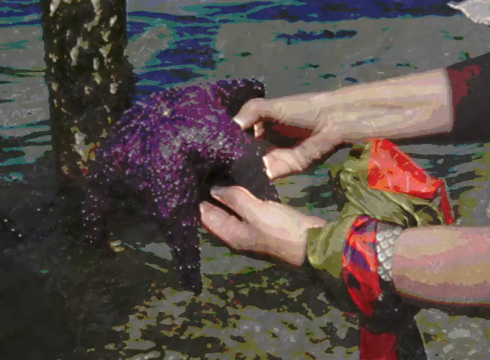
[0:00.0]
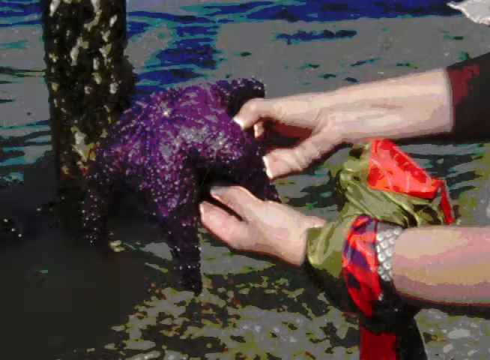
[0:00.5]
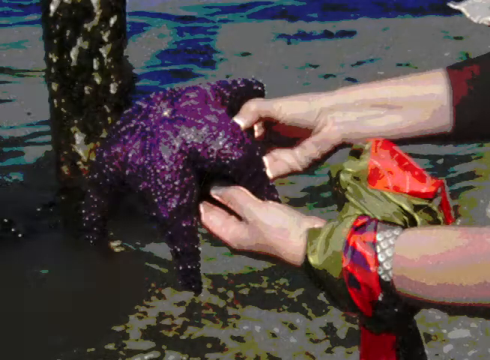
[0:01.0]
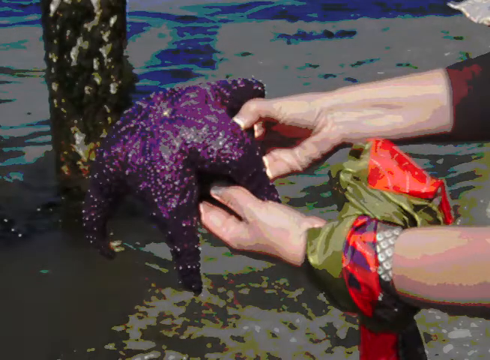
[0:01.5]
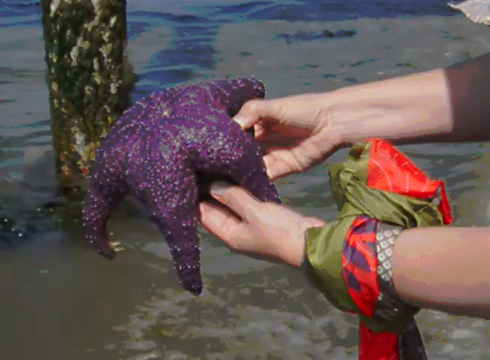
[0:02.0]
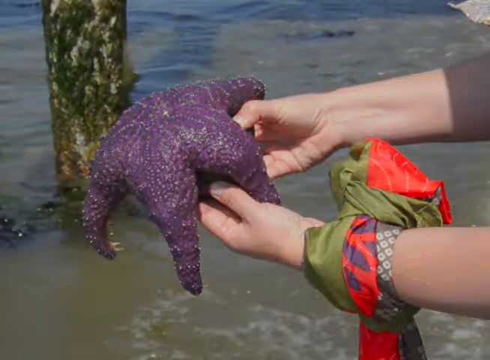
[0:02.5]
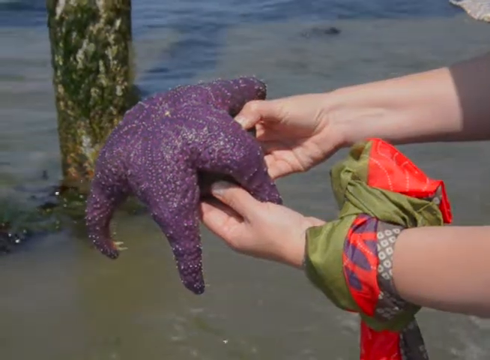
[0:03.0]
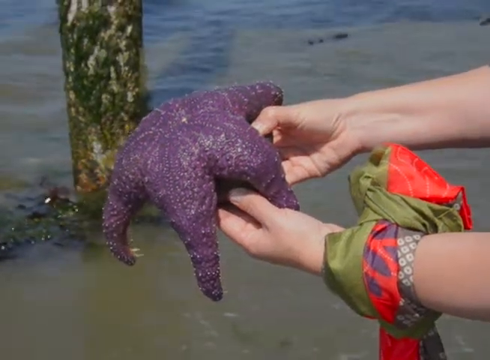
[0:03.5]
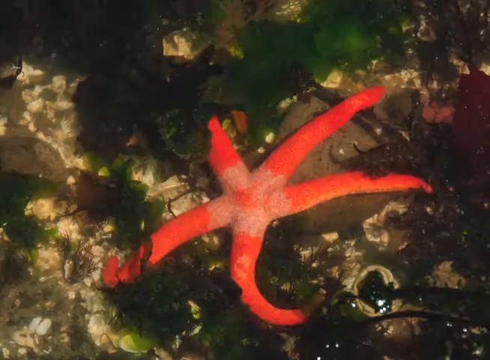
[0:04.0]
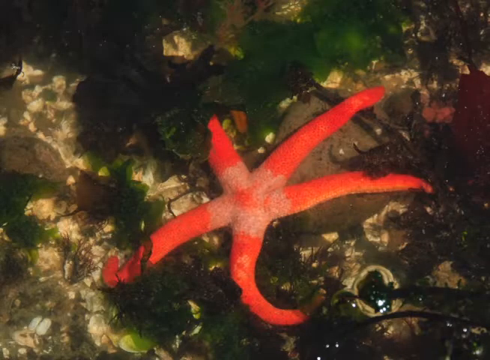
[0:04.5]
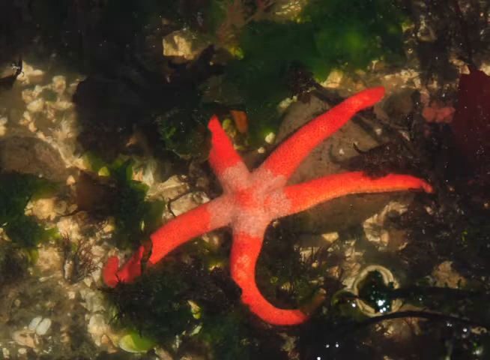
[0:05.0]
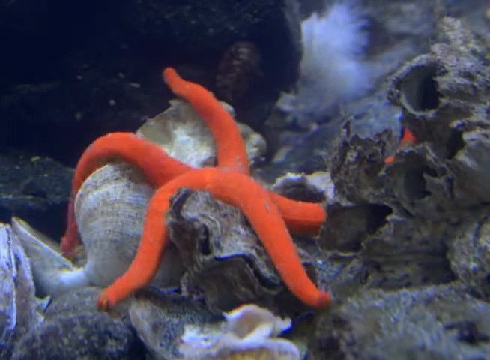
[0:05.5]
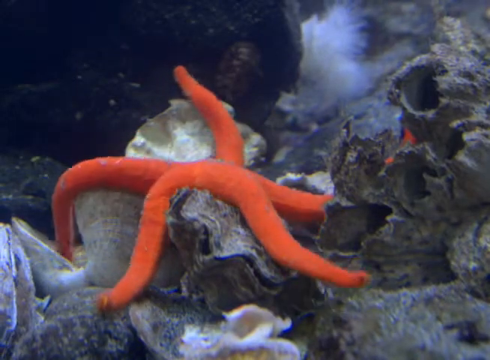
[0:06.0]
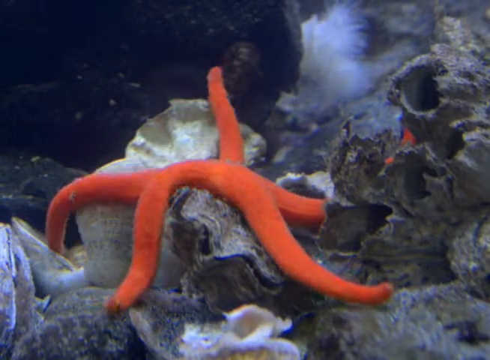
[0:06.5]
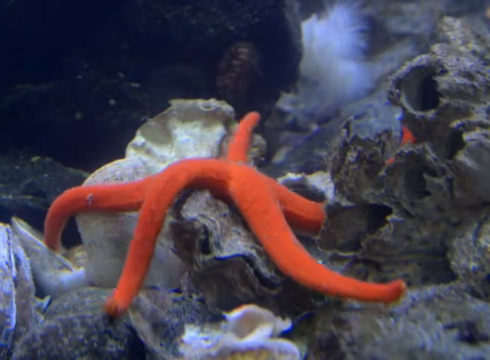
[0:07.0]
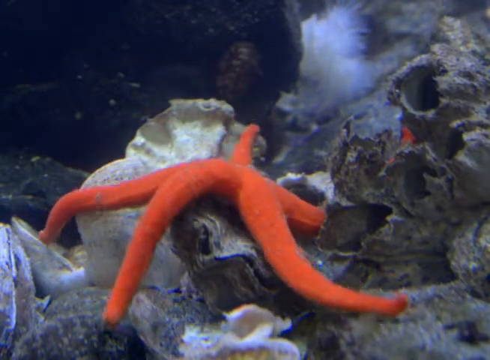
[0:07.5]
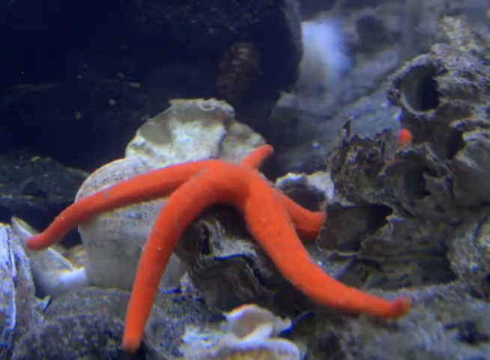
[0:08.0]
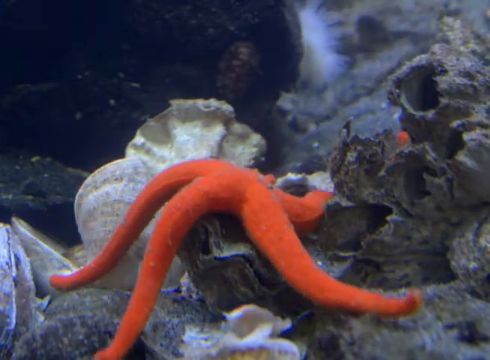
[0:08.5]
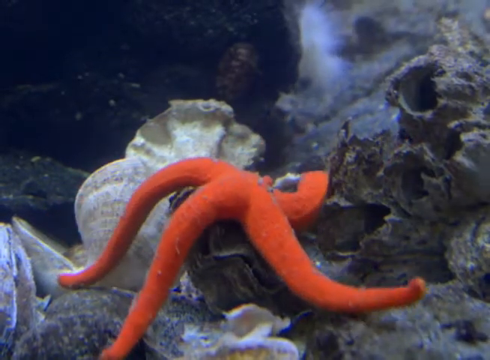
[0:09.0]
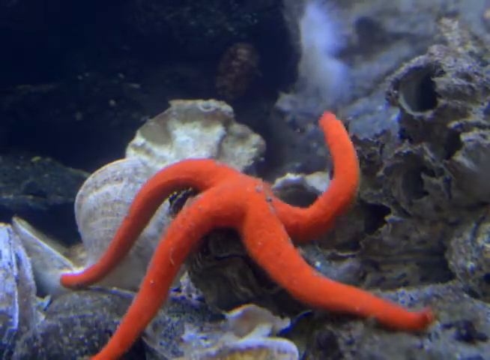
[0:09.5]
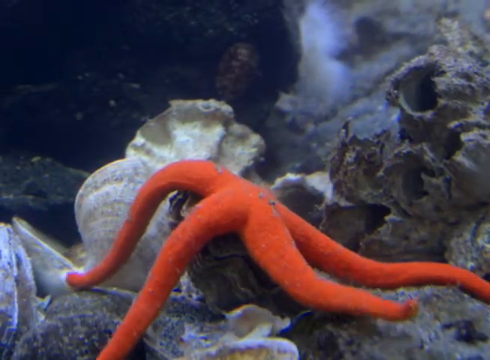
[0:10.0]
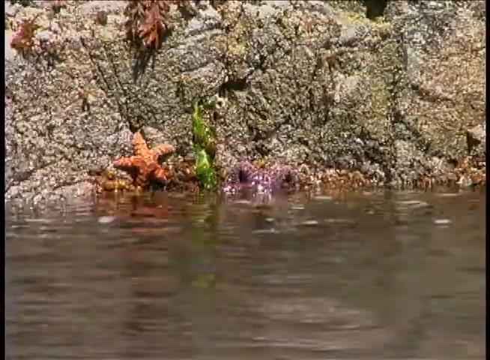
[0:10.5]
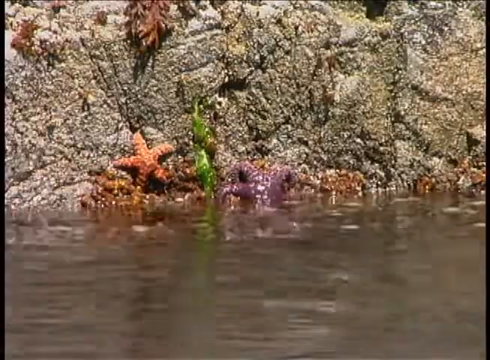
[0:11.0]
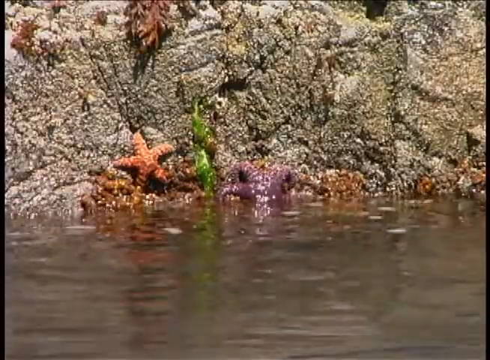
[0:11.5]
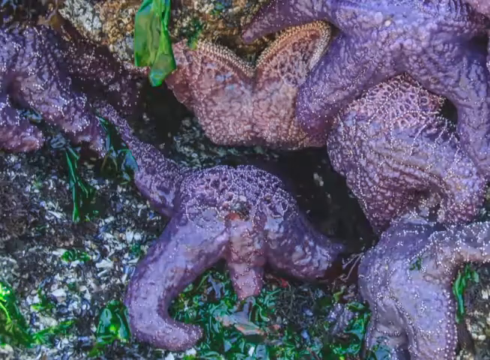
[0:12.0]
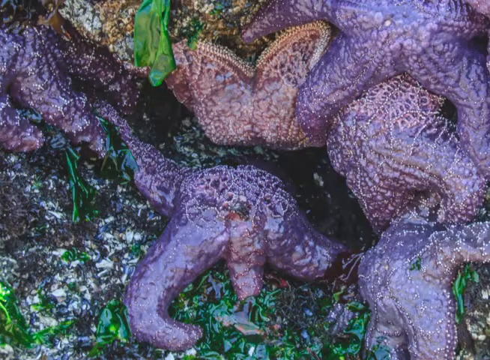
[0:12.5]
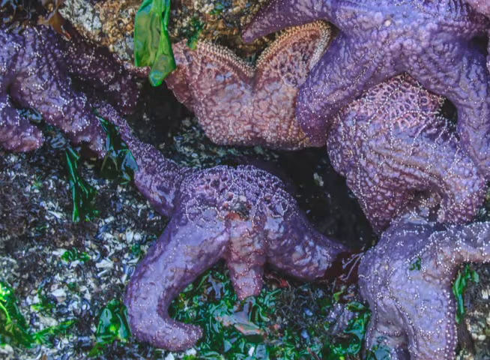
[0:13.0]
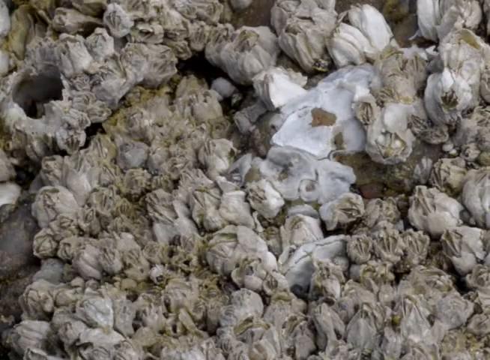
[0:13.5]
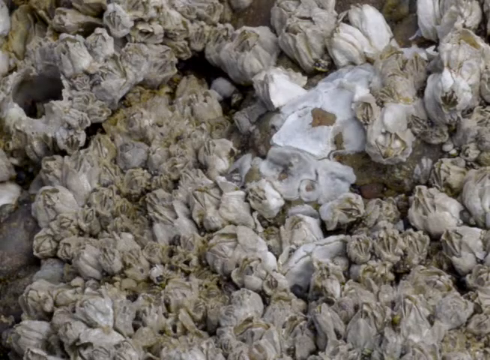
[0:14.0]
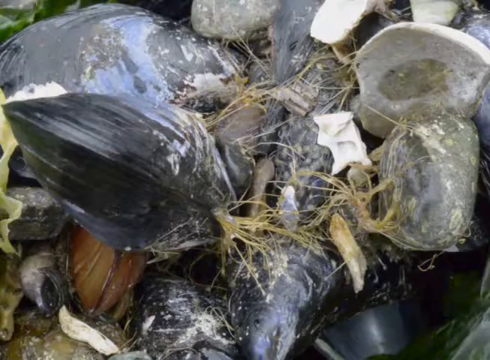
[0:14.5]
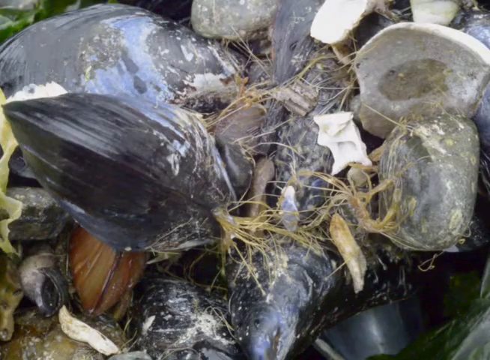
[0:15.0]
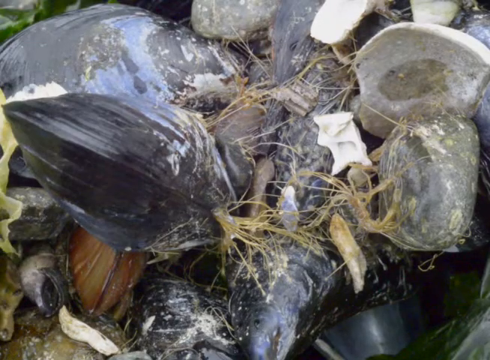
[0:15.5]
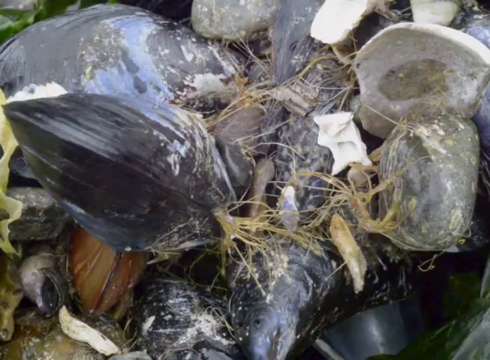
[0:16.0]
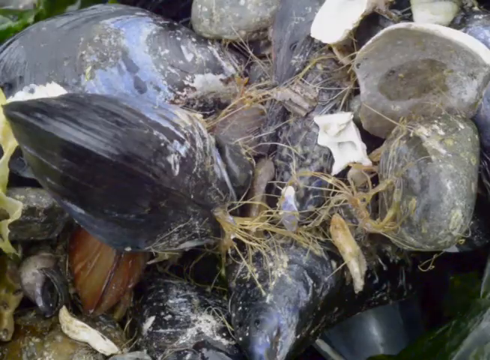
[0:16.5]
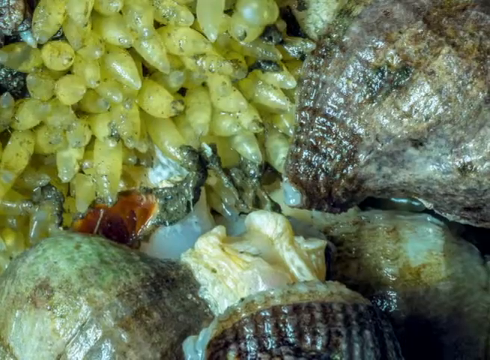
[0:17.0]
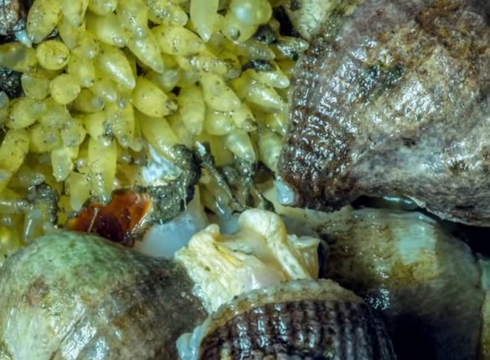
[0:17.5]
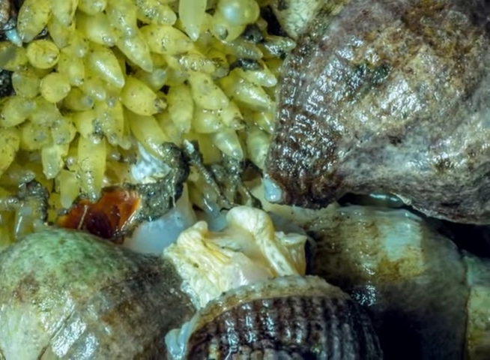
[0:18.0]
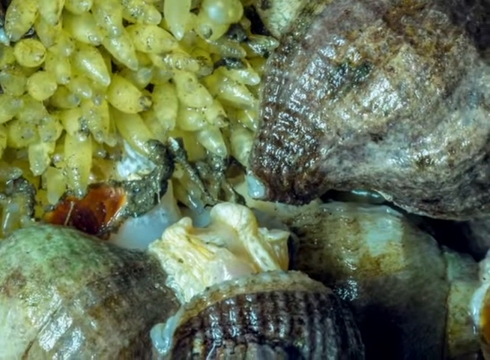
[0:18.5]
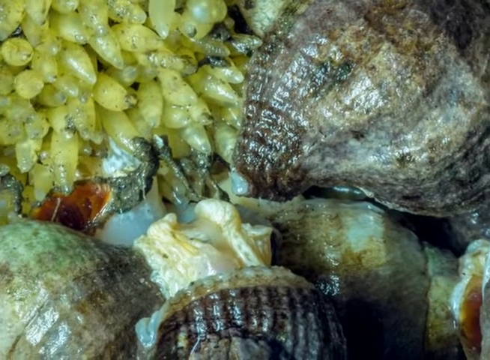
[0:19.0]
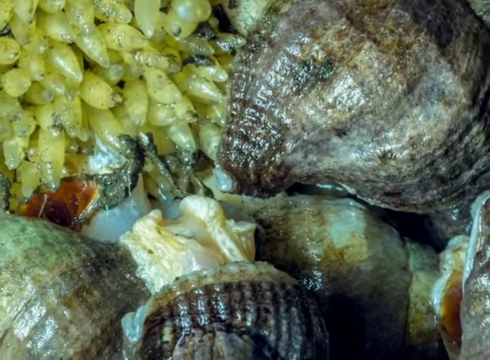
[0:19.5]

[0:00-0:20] Undersea creatures are shown, and a human hand holds them out of the water. Different kinds appear: there is what looks like an octopus, which is purple, and an orange one as well at the bottom. Everything is captured underwater, and the creatures make some swift movements. They are also seen just outside of the water, basking in the sun. There are many underwater creatures, and the picture quality is good. There are visible snails, and some creatures that look like worms are next to the shells. Everything is slimy and wet. The worms are yellow, and there are more than twenty of them.